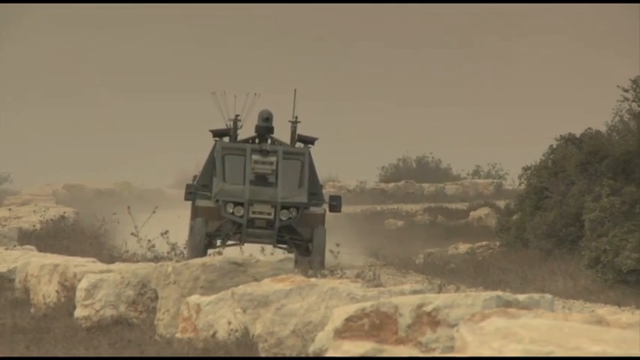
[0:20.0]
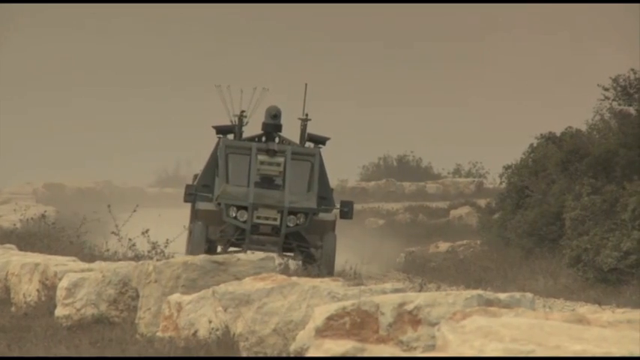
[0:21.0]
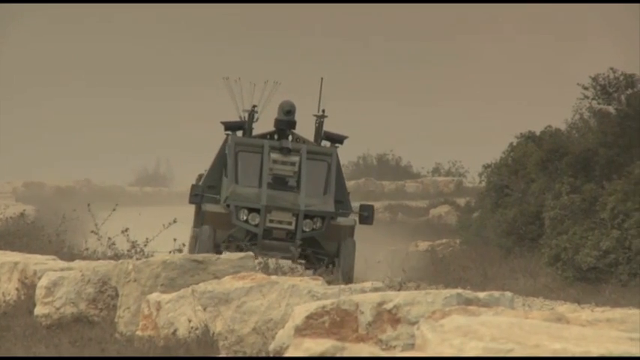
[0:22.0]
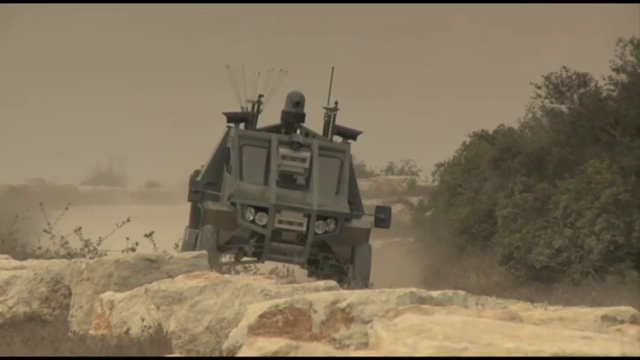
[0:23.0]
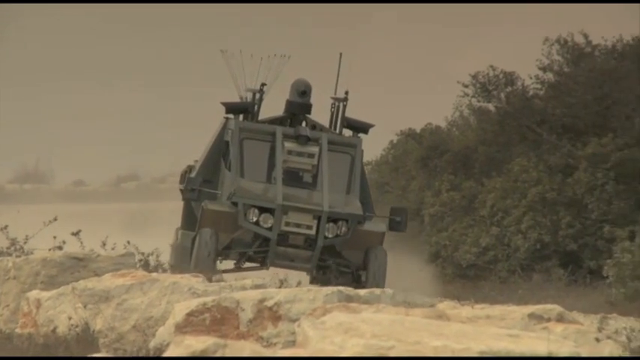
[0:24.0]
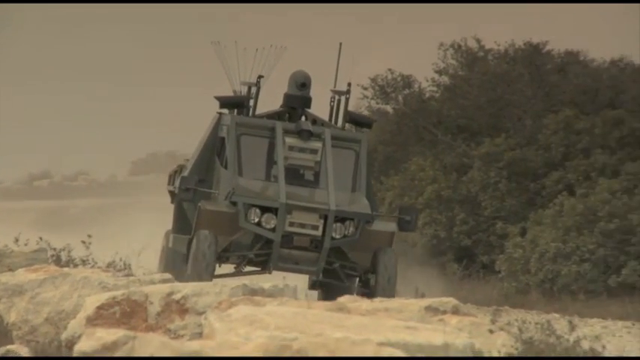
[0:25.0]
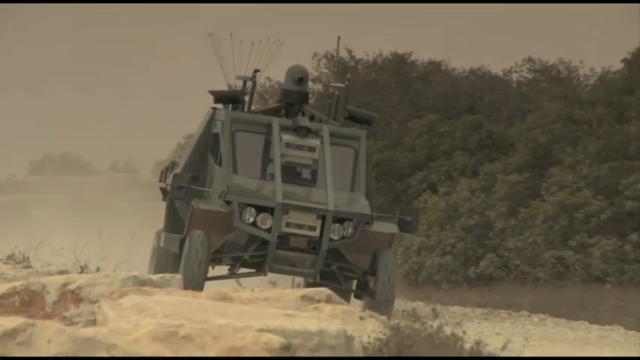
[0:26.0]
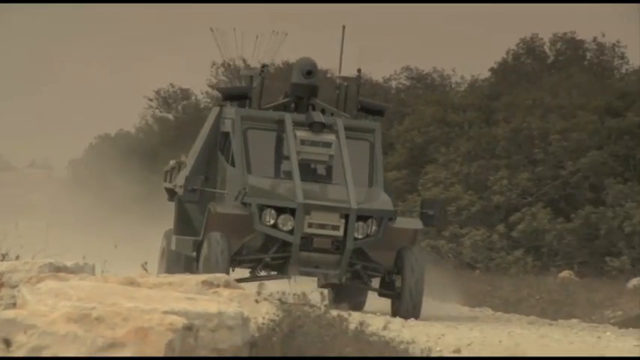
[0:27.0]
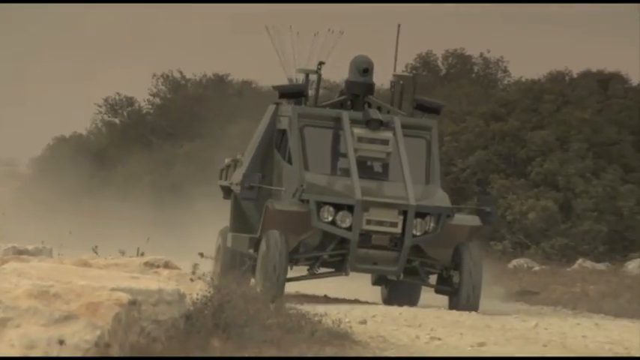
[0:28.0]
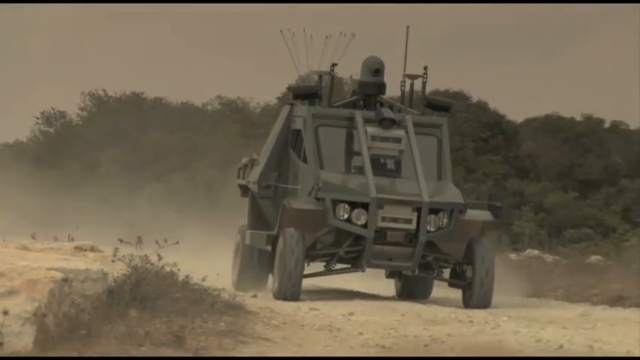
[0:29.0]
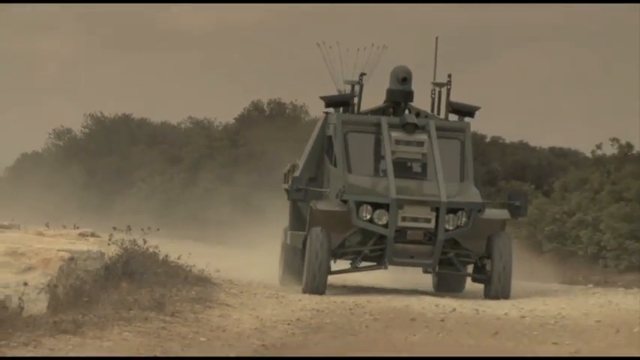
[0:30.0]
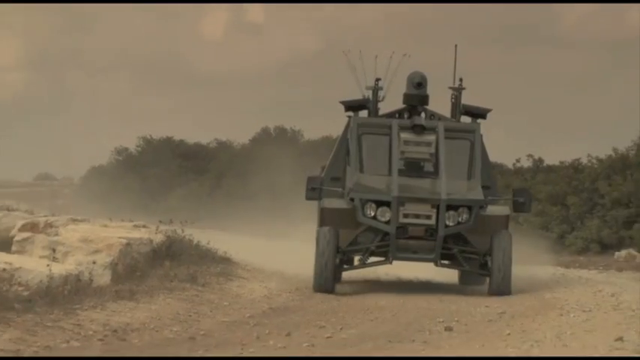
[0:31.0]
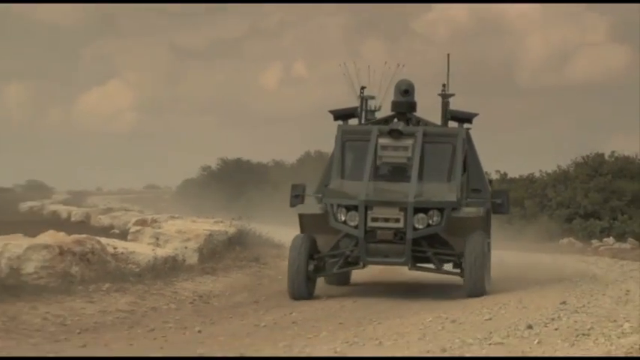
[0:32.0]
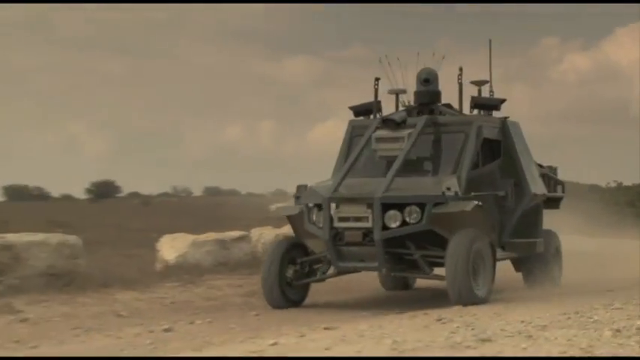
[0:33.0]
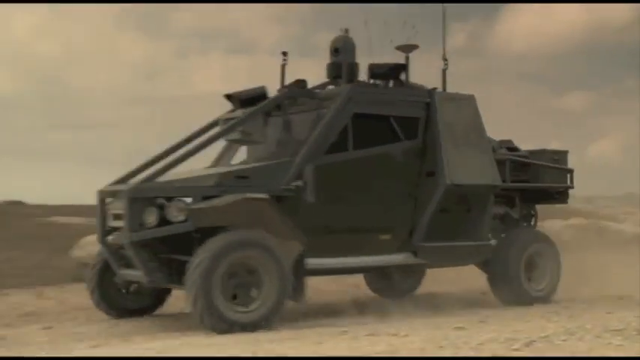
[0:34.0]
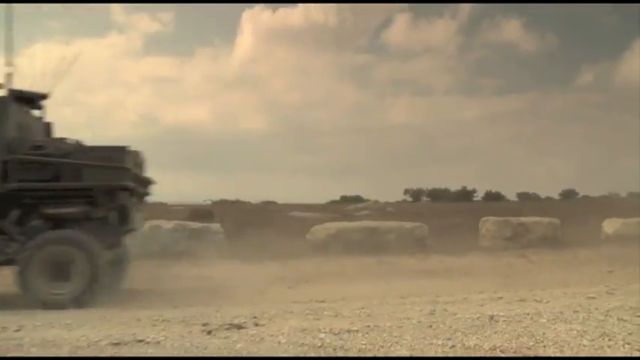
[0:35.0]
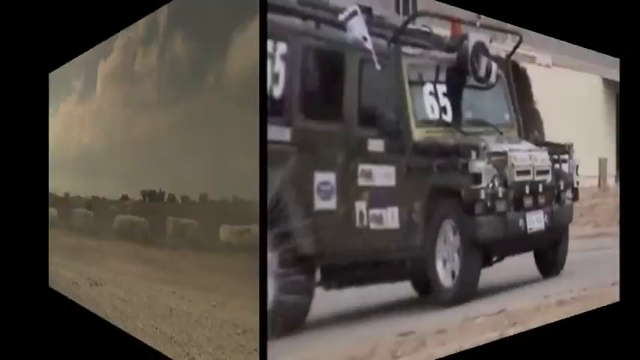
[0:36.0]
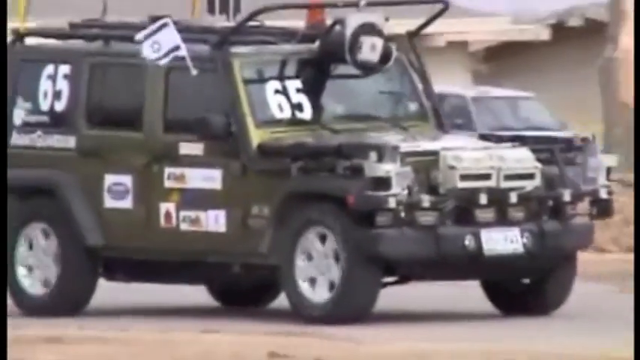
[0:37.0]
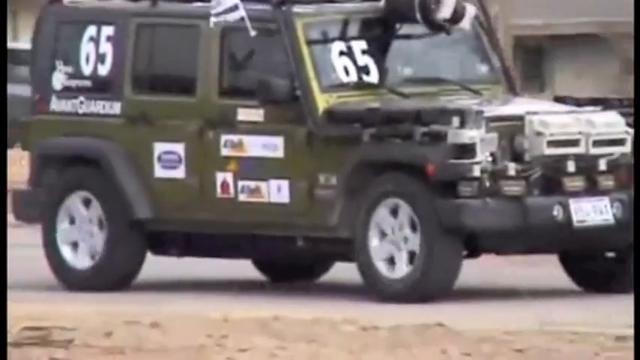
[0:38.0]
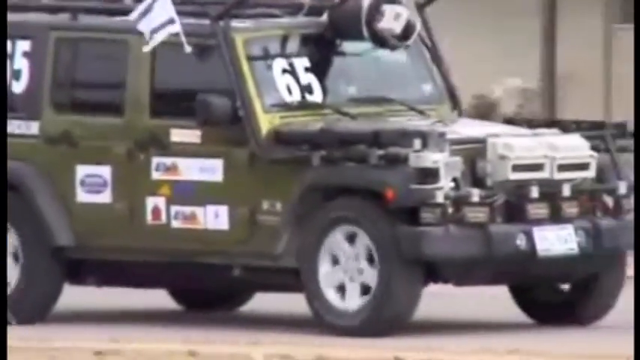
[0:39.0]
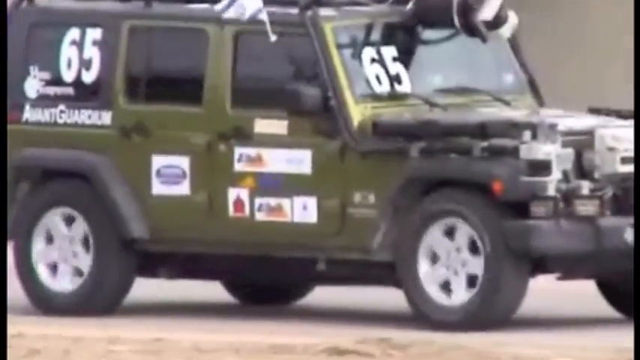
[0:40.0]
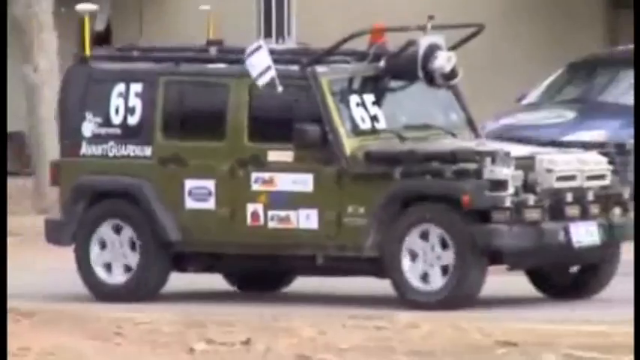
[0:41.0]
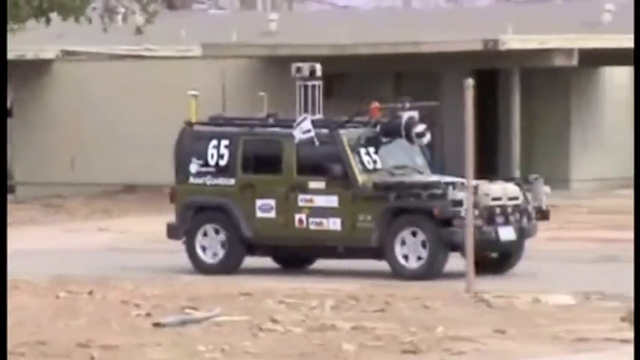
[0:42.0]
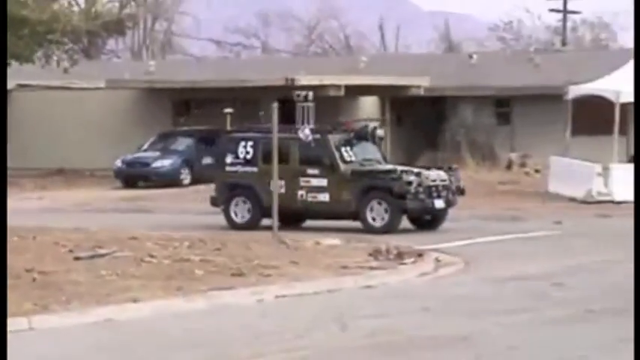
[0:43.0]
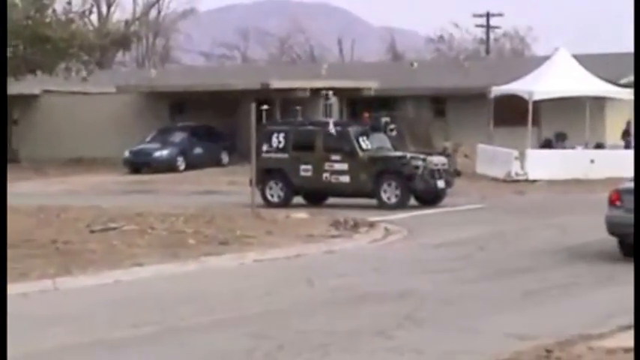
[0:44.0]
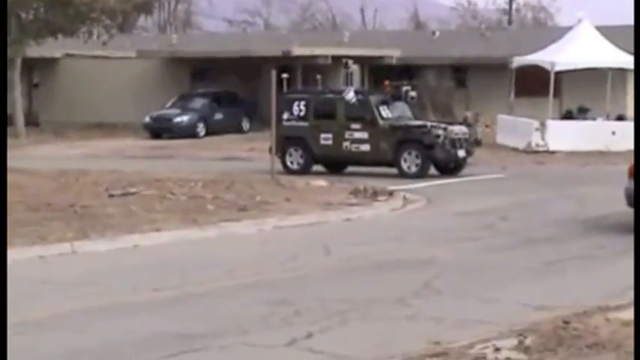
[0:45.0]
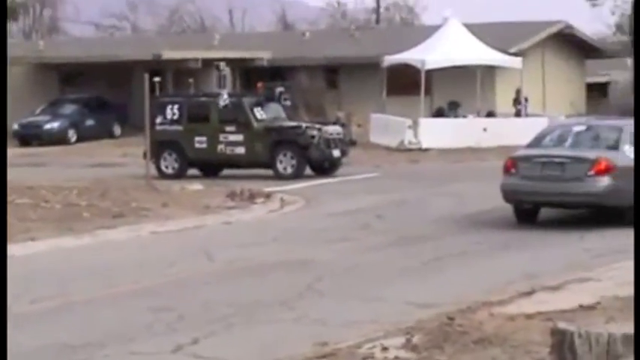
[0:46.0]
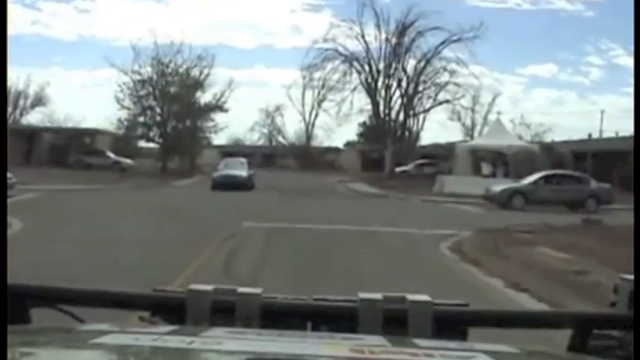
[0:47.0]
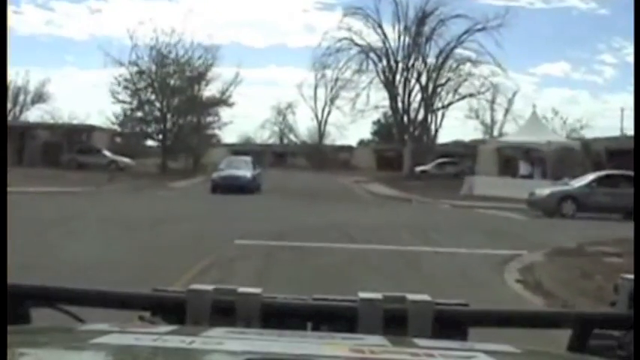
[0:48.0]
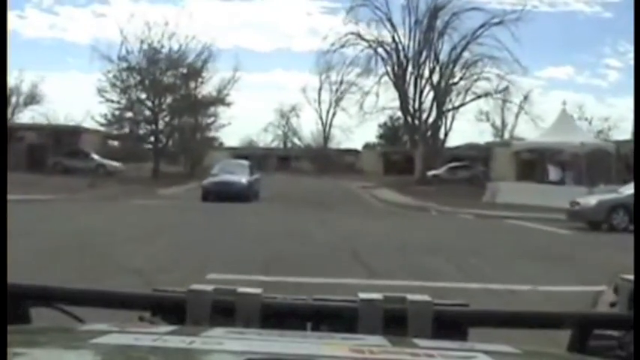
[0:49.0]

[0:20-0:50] The background is still the very dusty, sandy road. The military truck is now closer to the camera; it looks designed and ready for battle and seems to be going down the dusty road. The skies are still not clear and look cloudy or dirty. The truck comes closer and closer to the camera, and the camera also seems to be moving with it. What seems to be a cannon is on top of the truck. In the background there are plants or bushes that look like trees. The truck's wheels are very skinny, and it has a barricade. In the next scene there is a green Jeep with the number 65 on it and different images on the side doors near the handle. It is also filled with weapons around it. This military Jeep seems to be driving in a neighborhood or a military grounds where they train. Two more cars are in the scene, and a tent is set up for advertisement.